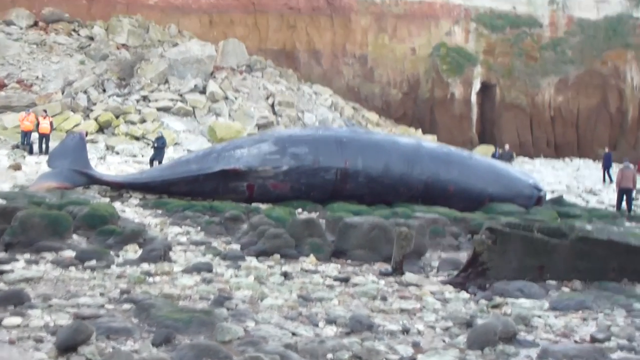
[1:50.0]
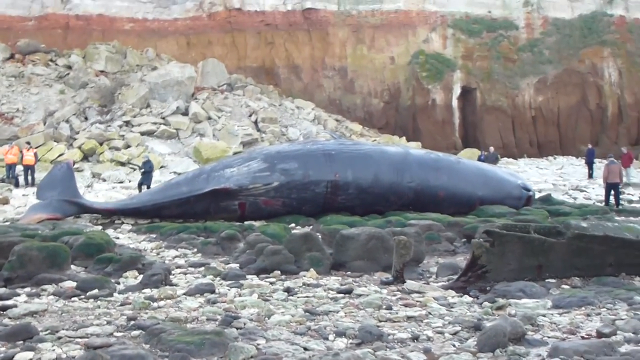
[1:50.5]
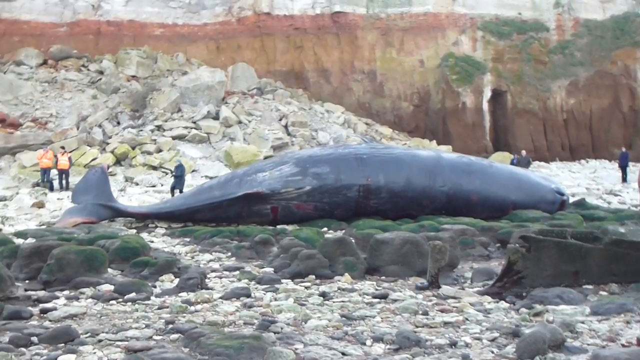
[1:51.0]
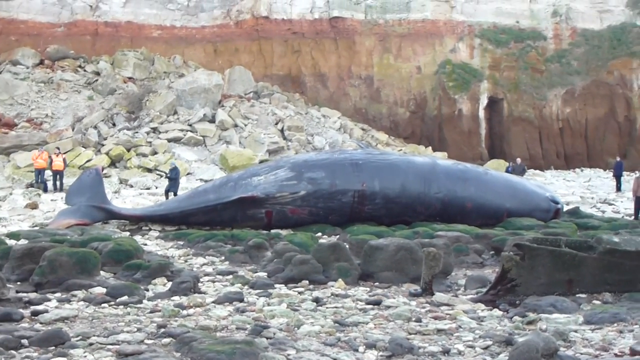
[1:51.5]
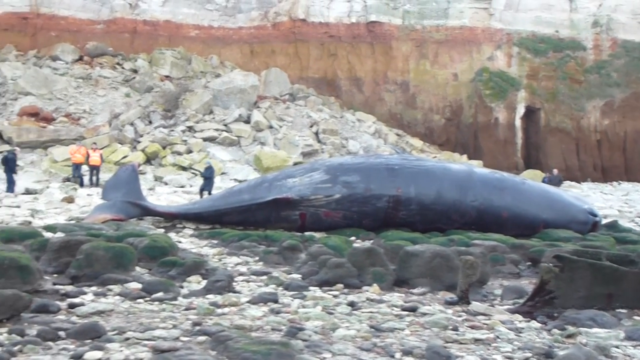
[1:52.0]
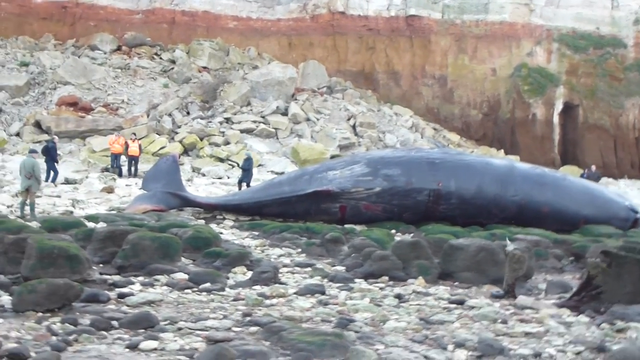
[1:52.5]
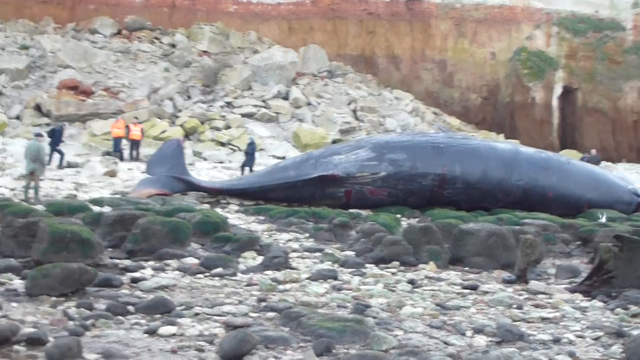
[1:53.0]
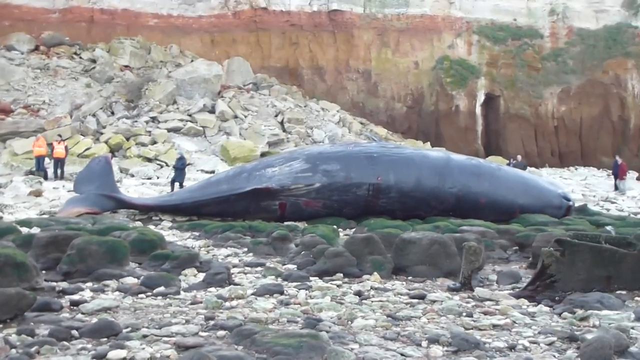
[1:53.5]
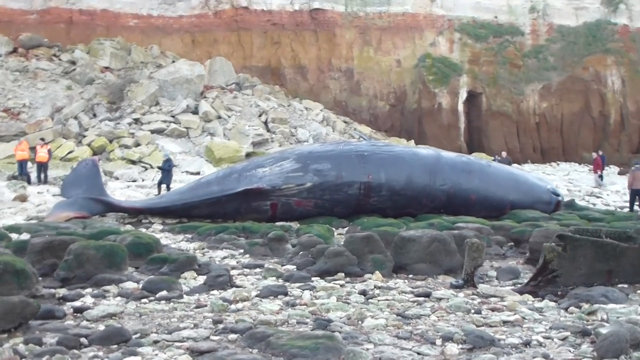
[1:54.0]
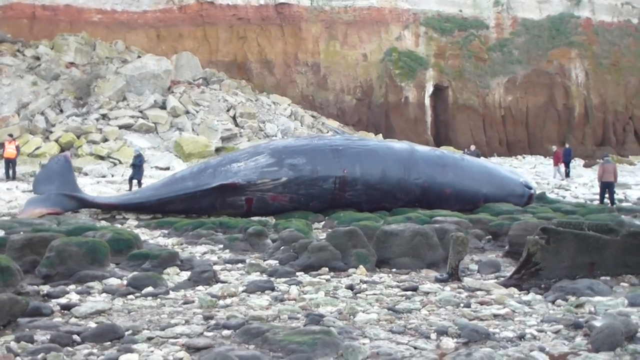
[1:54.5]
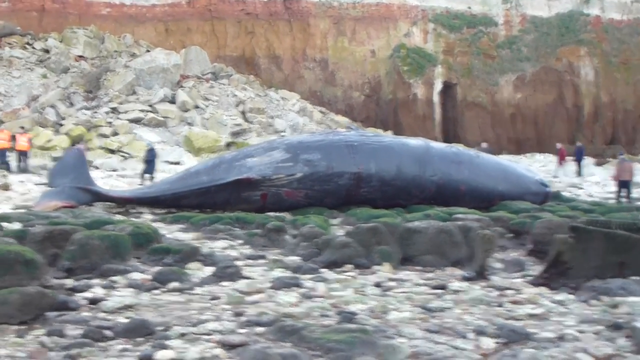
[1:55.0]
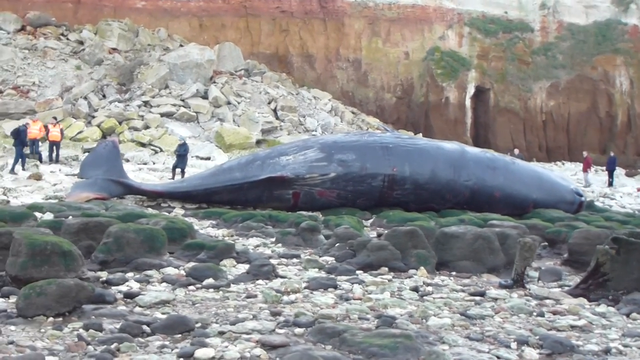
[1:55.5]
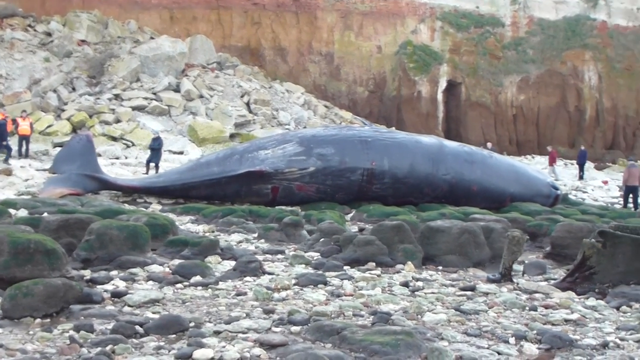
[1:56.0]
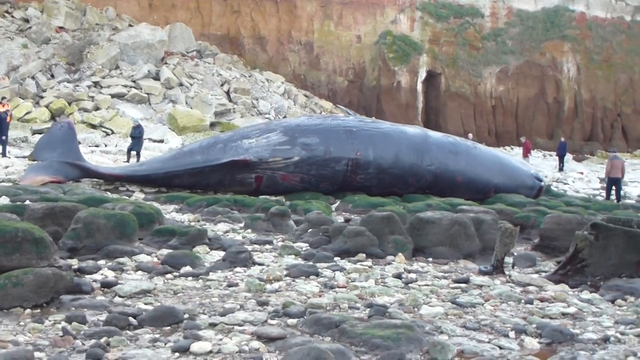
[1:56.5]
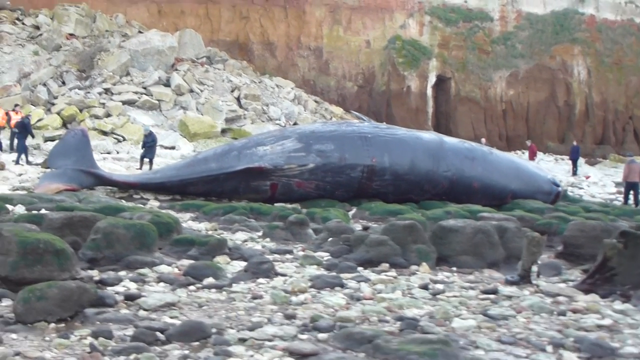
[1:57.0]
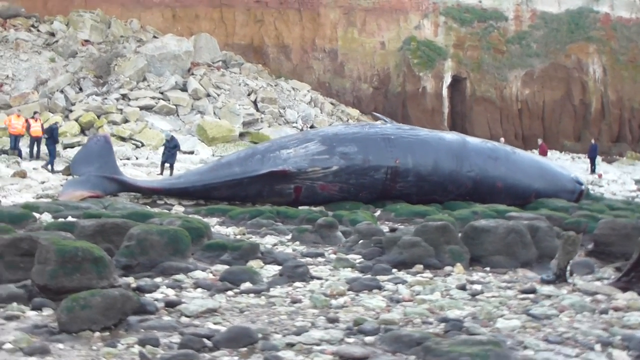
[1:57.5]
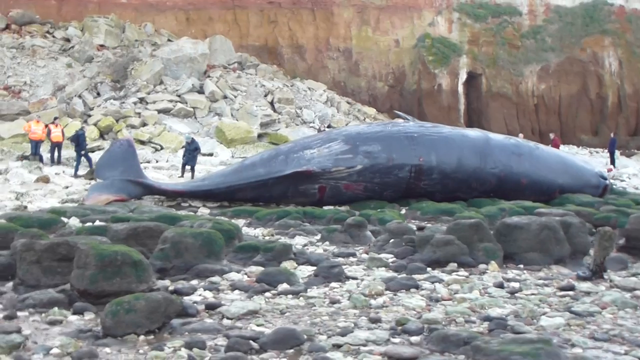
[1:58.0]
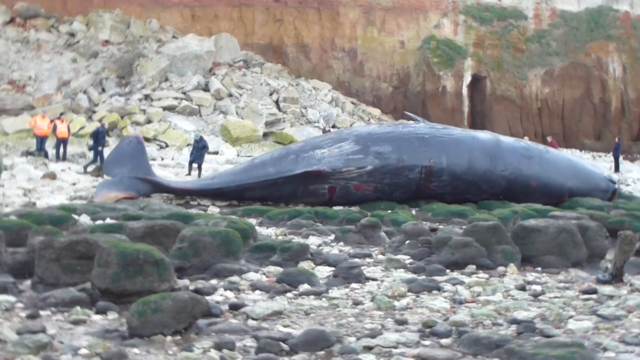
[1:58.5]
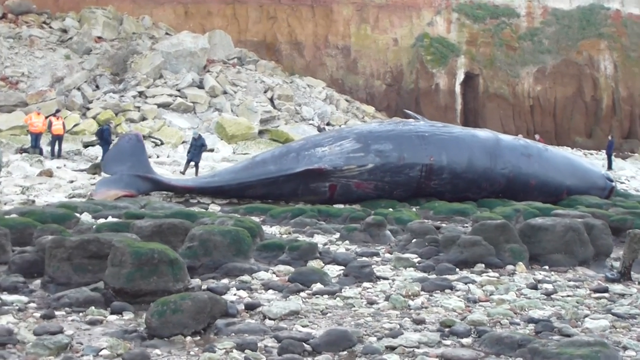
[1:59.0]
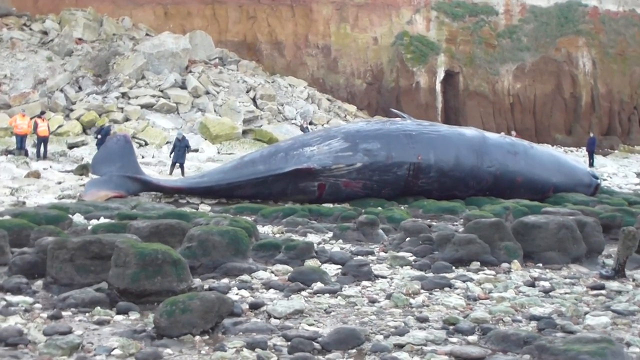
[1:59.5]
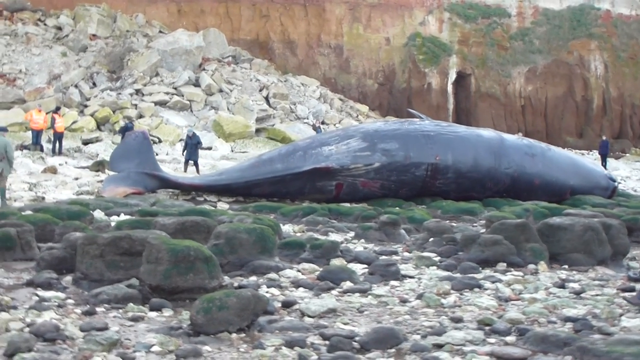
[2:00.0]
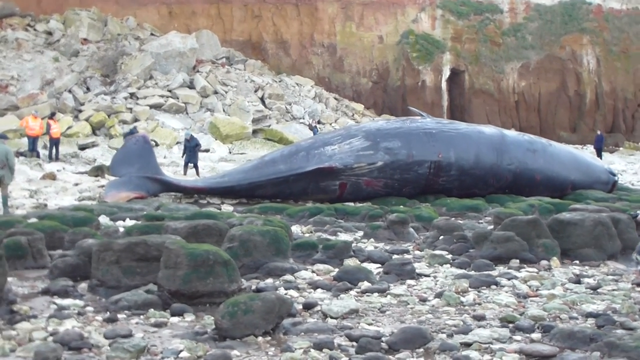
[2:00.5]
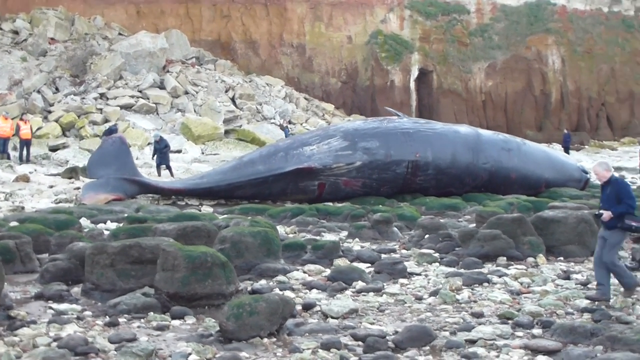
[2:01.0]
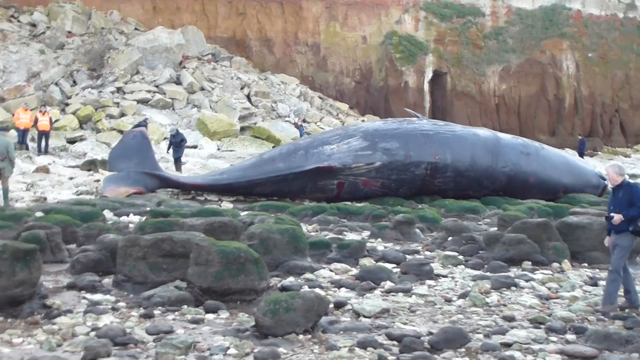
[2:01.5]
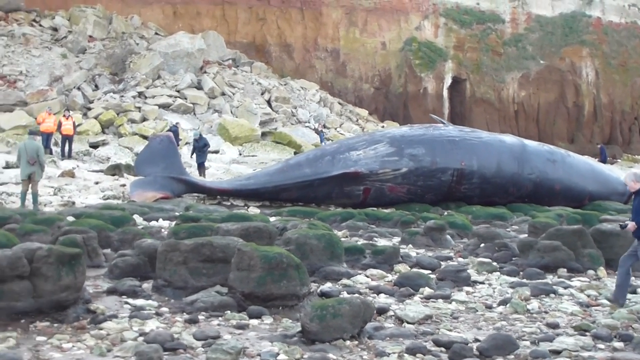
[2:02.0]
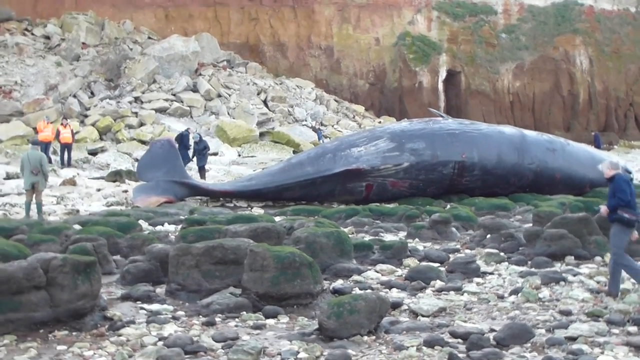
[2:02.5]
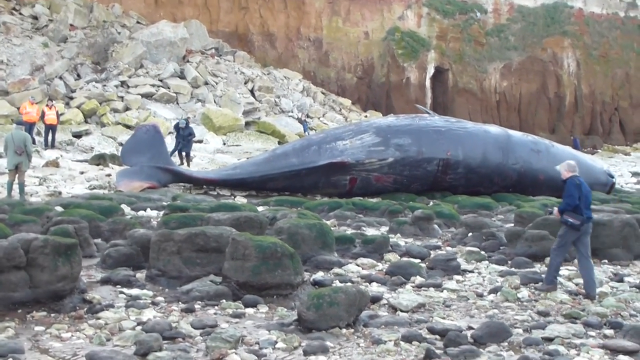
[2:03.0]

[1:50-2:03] A dead whale lies on its right side with blood coming out of its nostrils and cuts and gashes along its back; the gashes are very deep at its tail end. It lies on a section of green that looks like moss on a very rocky, stony beach. The face of the mountain in the back is clay colored. The wreckage of a boat, which looks as if it has been here for quite a while, is rotted out like an old boat, apparently a medium-sized one rather than a tiny one. Many people stand around the whale looking at it. The terrain is chaotic, with rocks and stones all over the beach, from huge boulders to medium-sized rocks, jagged boulders and smooth rocks, and no small stones.